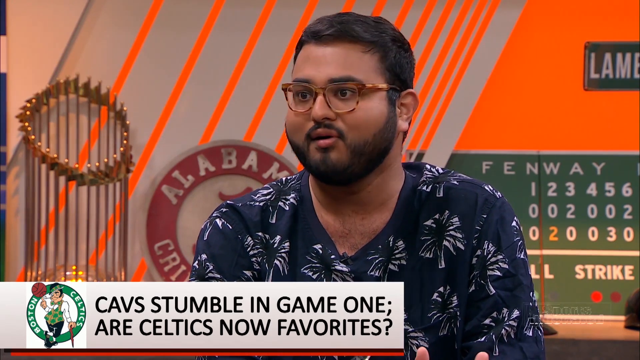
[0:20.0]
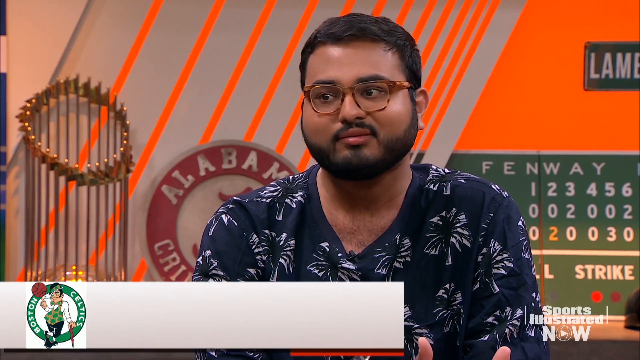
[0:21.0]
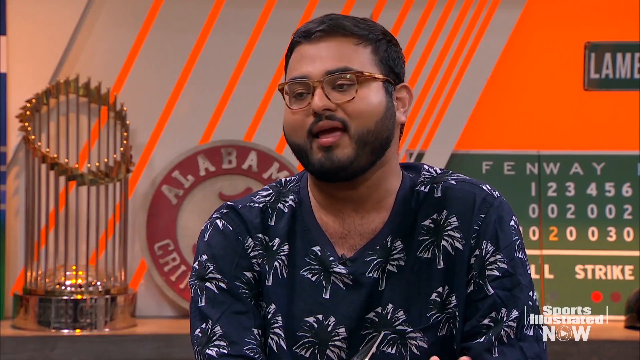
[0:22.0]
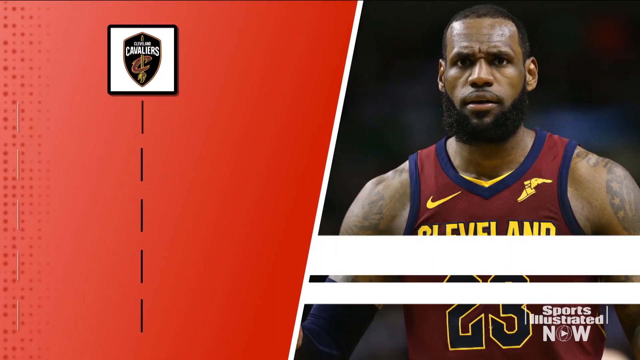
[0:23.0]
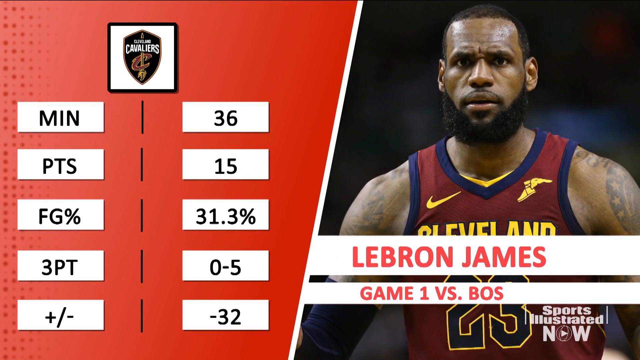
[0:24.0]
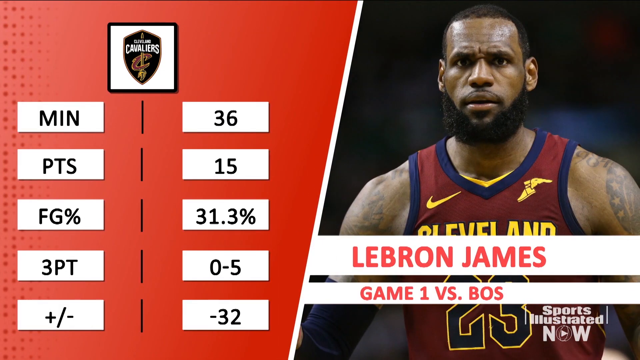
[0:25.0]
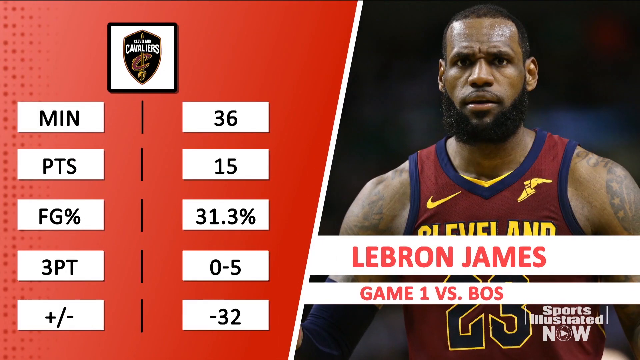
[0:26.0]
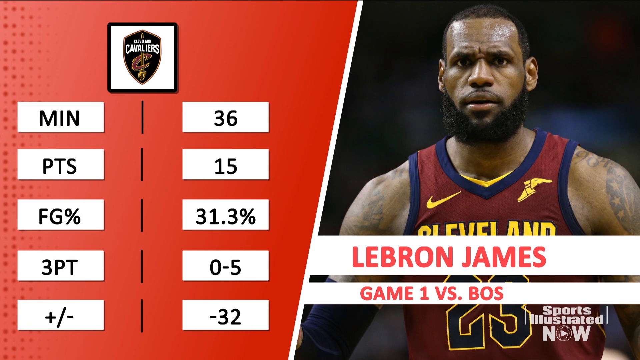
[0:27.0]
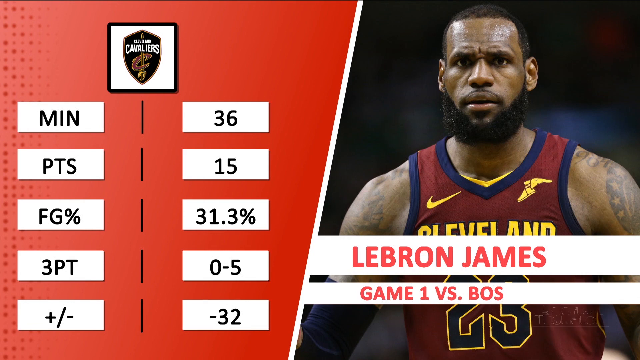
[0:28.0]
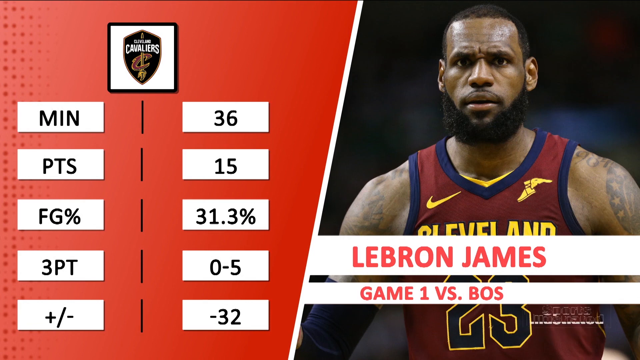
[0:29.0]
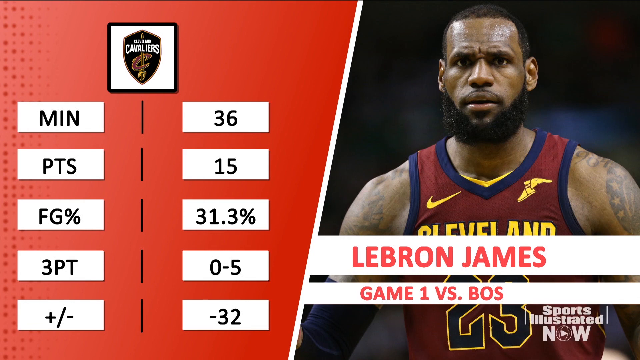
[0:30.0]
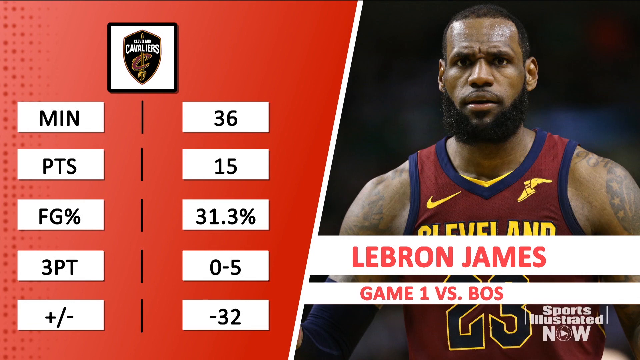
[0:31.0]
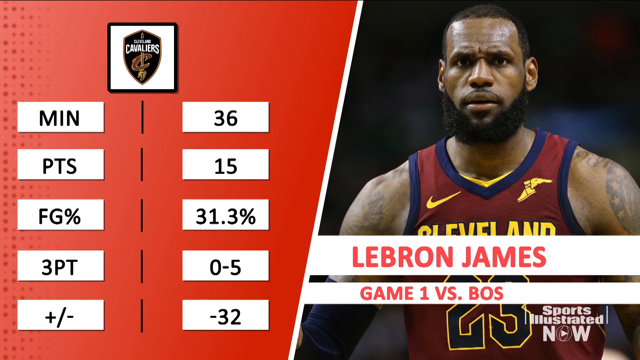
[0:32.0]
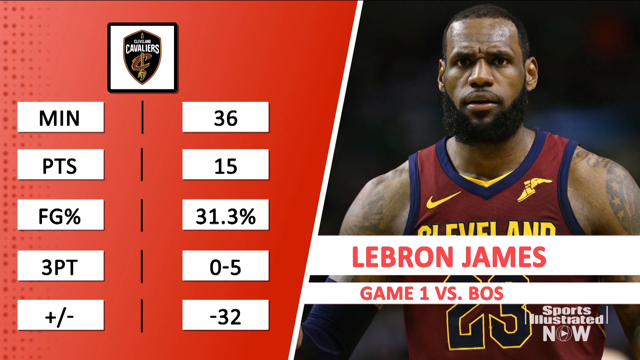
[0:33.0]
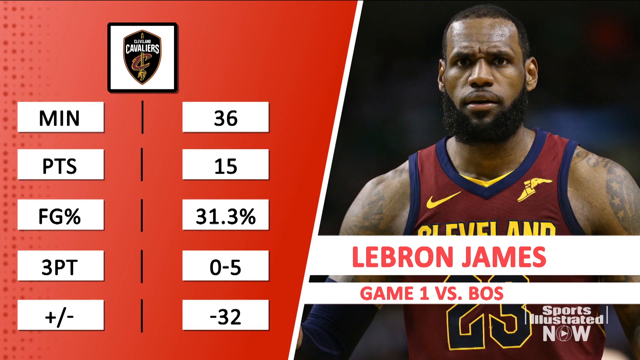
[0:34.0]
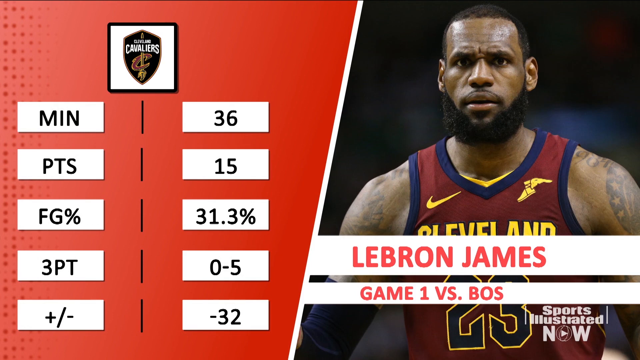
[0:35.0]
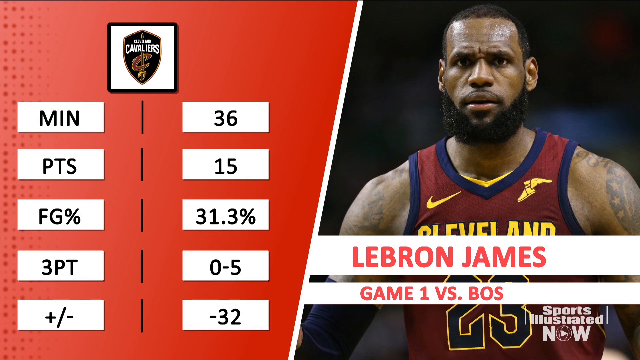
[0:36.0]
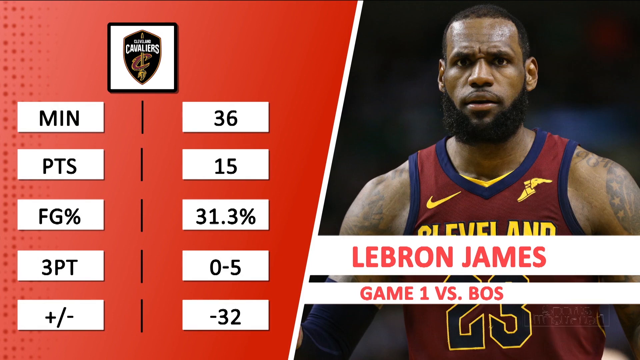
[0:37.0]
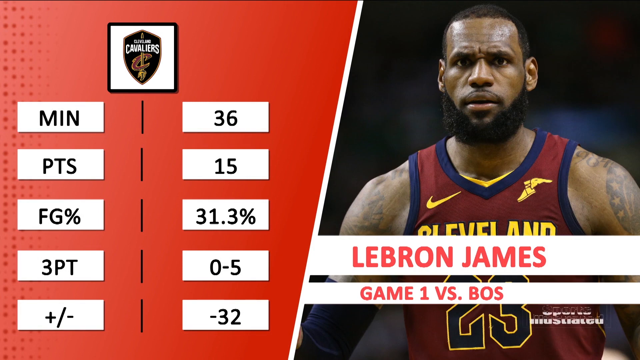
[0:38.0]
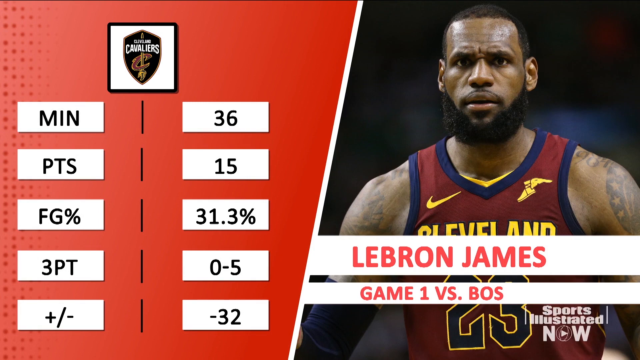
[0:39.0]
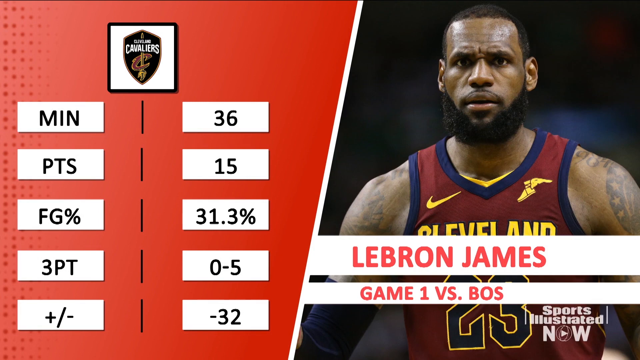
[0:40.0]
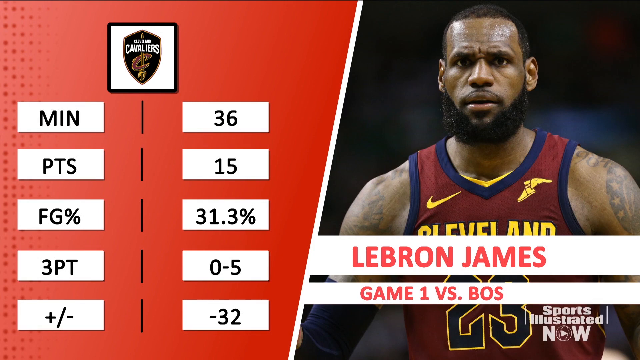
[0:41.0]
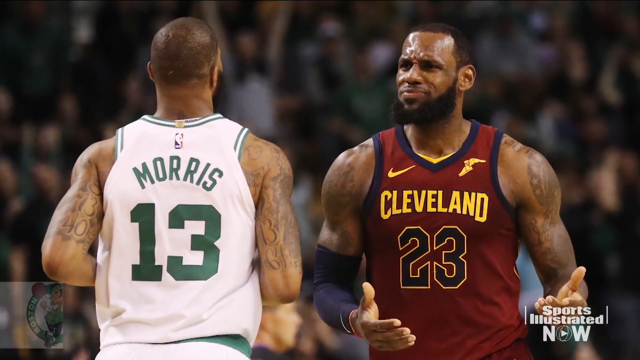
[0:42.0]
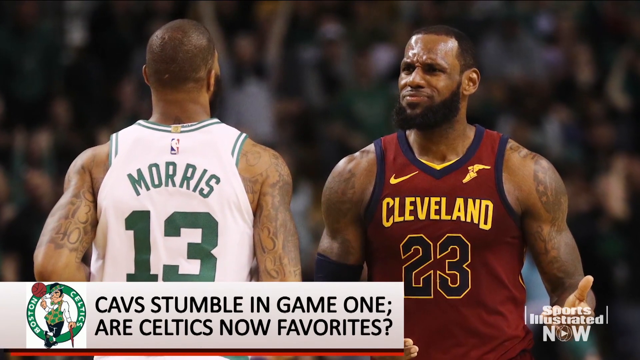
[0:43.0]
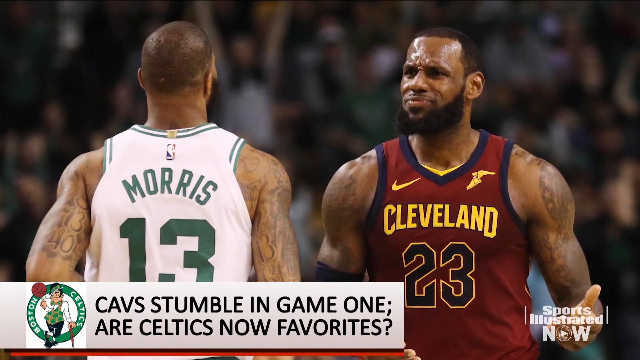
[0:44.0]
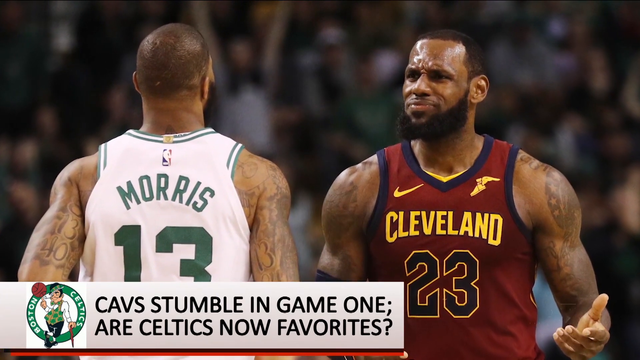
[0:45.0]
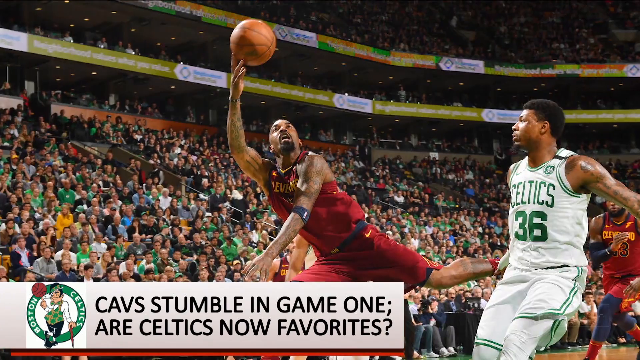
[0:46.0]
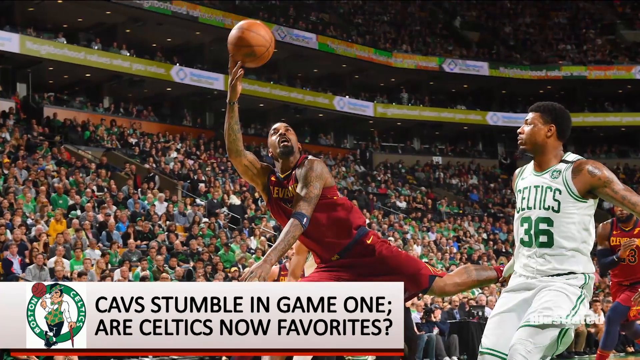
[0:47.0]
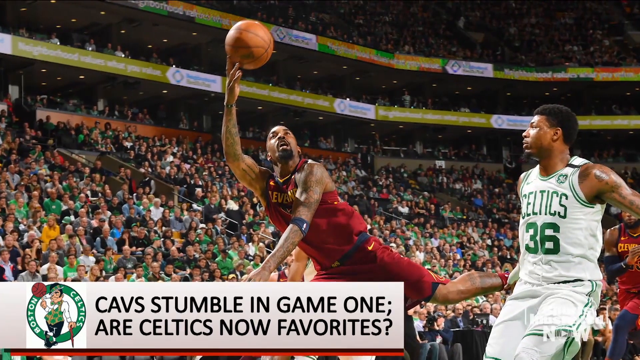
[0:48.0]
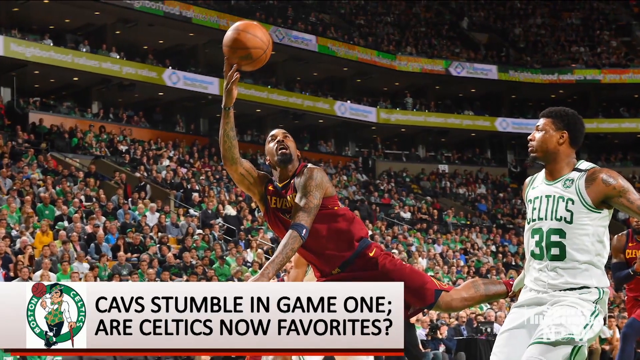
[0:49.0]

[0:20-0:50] A man briefly says some words, then the video transitions to a slide showing LeBron James on the right half, with the text "game one versus BOS" and "Sports Illustrated NW" in the bottom right corner. The left half shows a column of statistics for LeBron James from that night: a box labeled "min" with 36, a box labeled "points" with 15, field goal percentage at 31.3 percent, three-pointers at zero for five, and a final box at the bottom labeled "+/-" showing -32. The next slide shows LeBron James with a sort of confused look on his face, staring at an opposing player wearing number 13 with the last name Morris on his jersey. Another slide shows a Cavaliers player diving to keep a ball in bounds, trying to tip the ball back into the court to keep it in play.